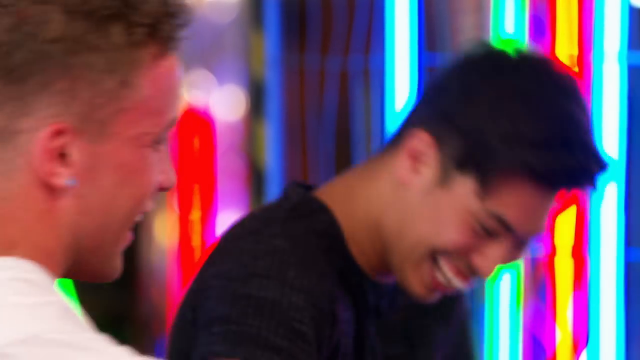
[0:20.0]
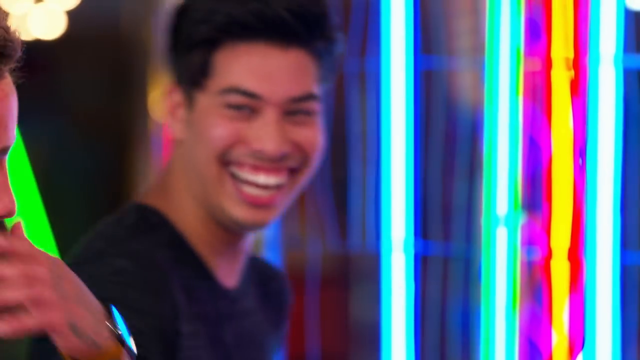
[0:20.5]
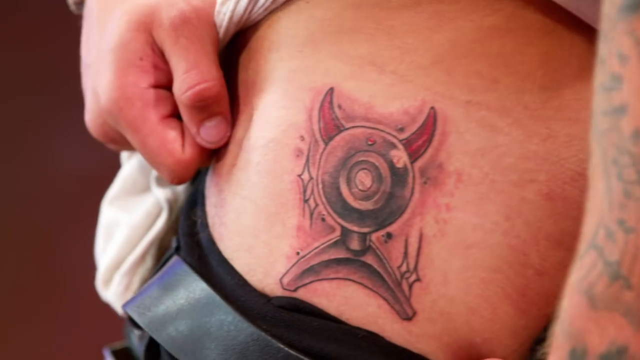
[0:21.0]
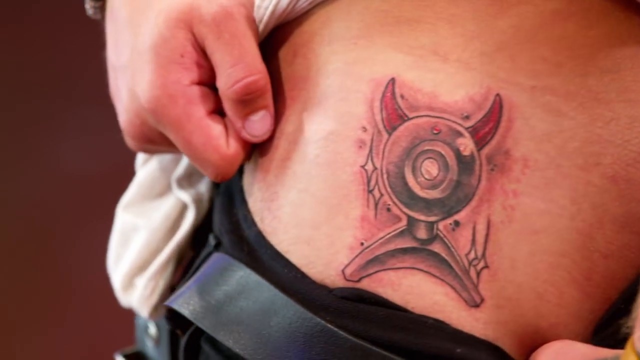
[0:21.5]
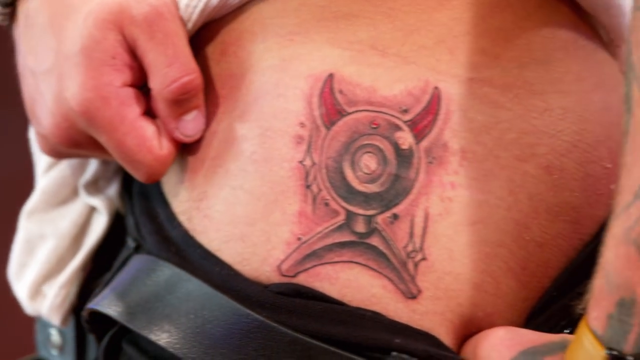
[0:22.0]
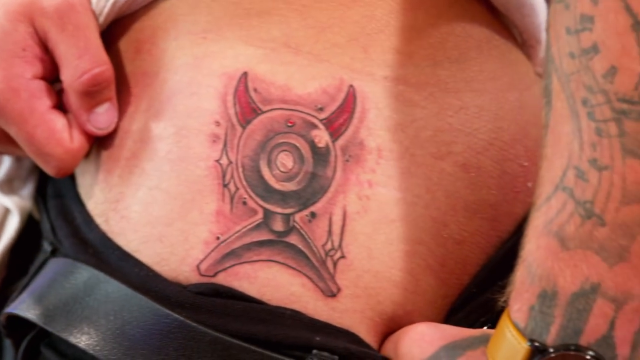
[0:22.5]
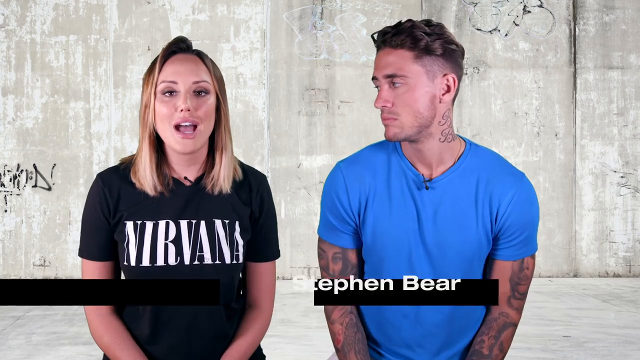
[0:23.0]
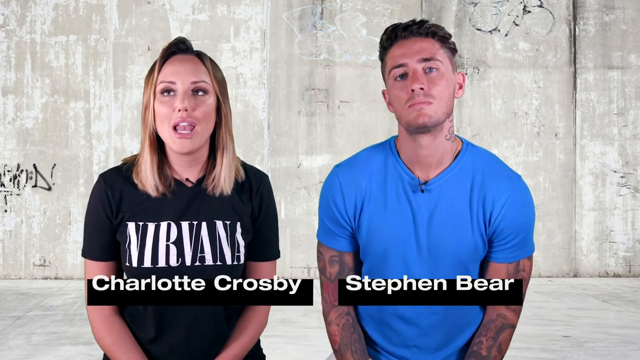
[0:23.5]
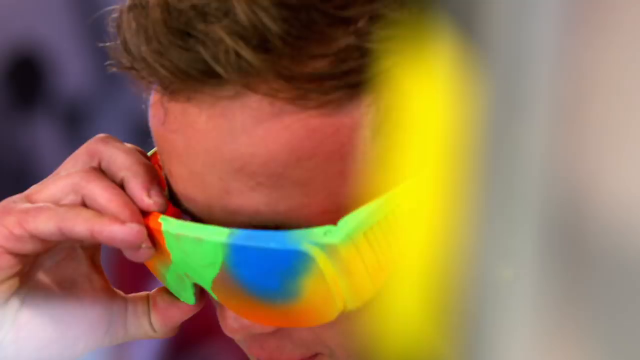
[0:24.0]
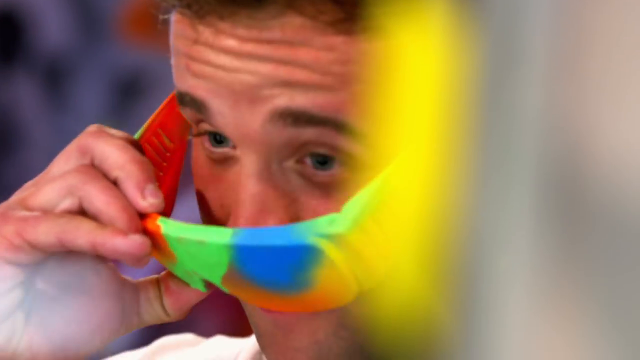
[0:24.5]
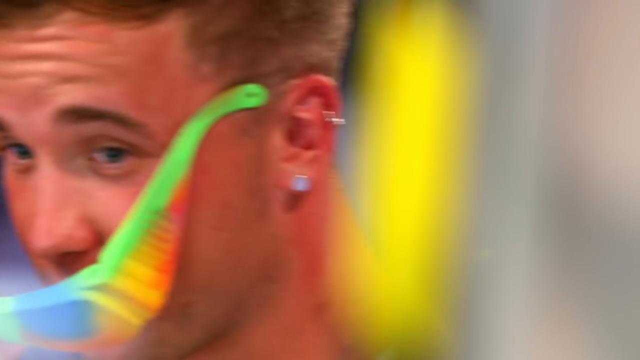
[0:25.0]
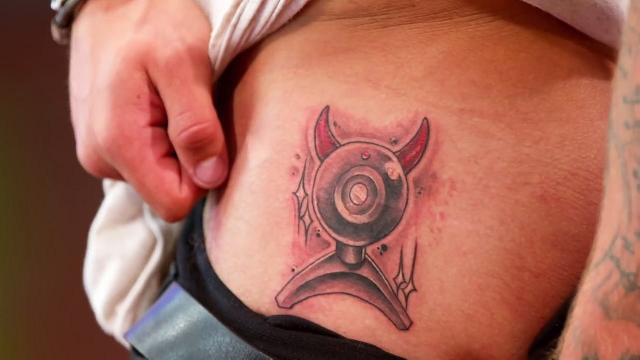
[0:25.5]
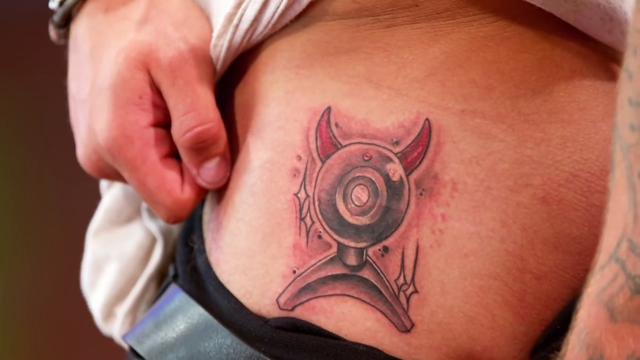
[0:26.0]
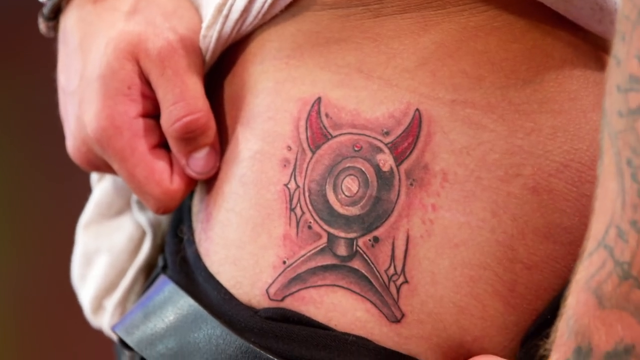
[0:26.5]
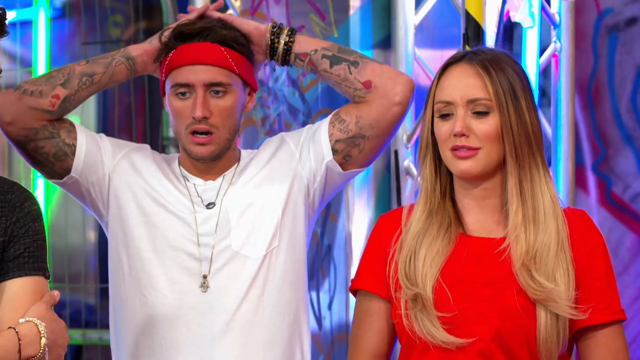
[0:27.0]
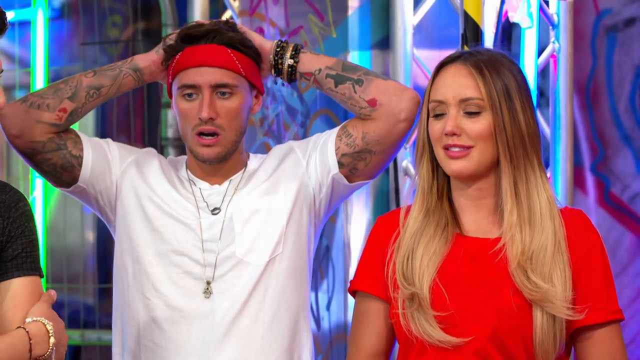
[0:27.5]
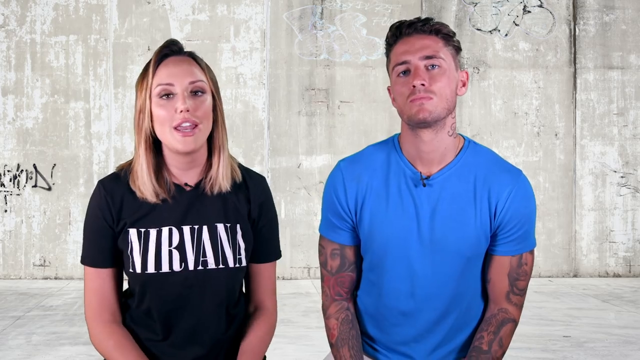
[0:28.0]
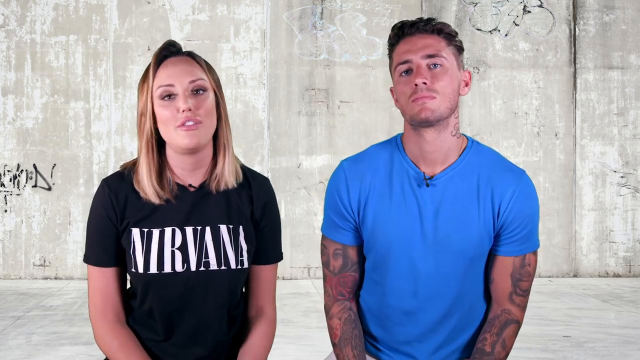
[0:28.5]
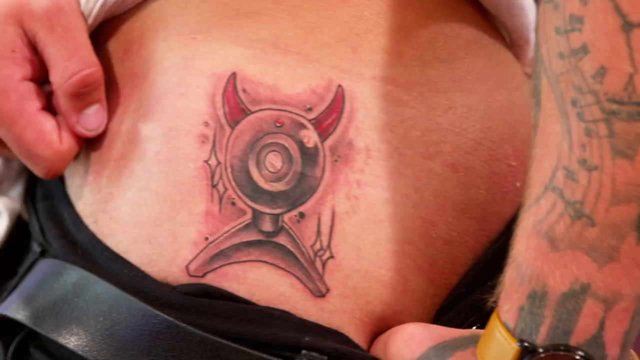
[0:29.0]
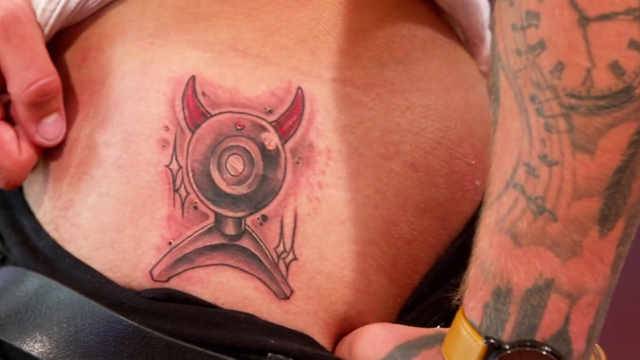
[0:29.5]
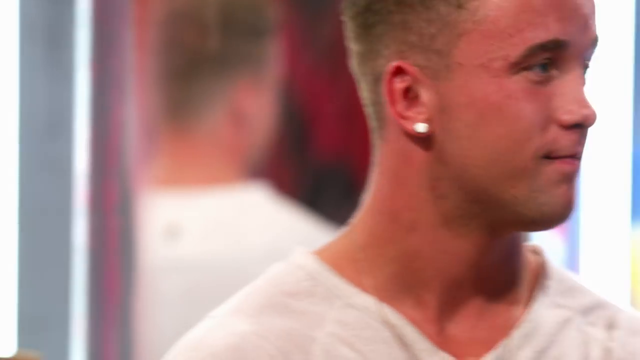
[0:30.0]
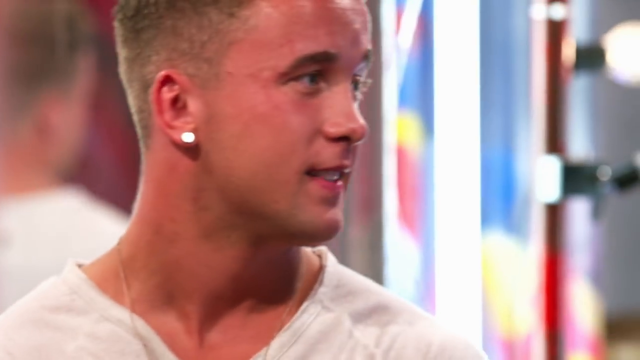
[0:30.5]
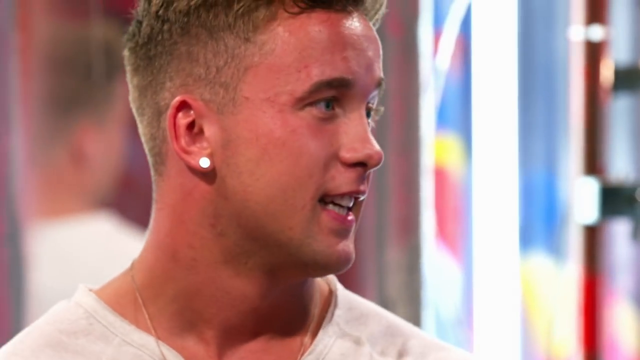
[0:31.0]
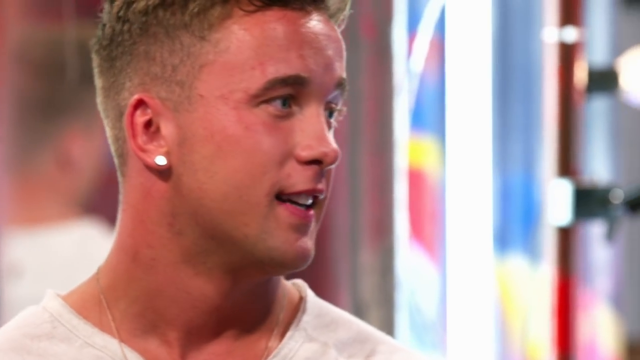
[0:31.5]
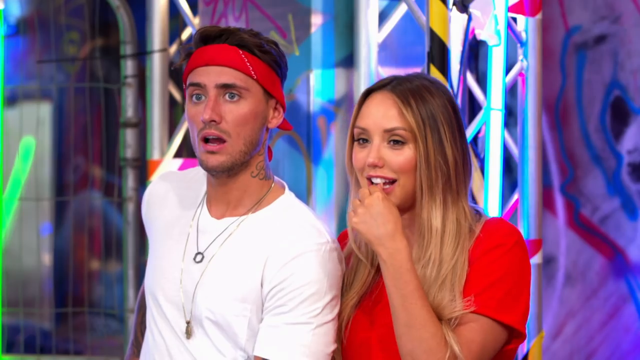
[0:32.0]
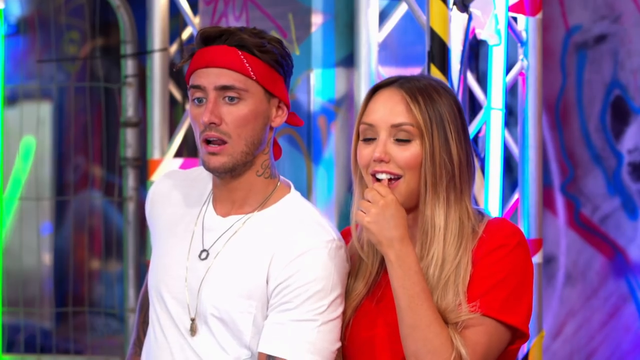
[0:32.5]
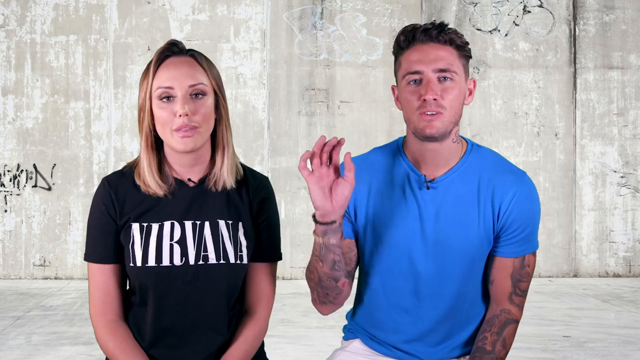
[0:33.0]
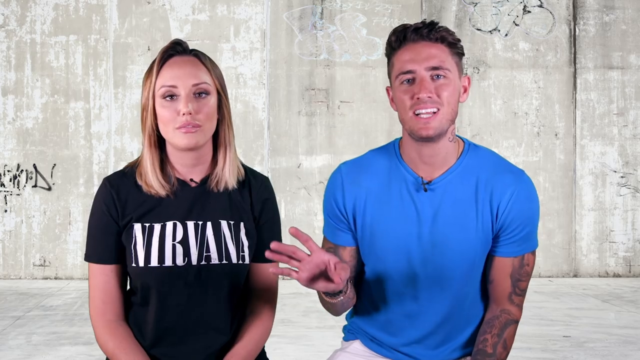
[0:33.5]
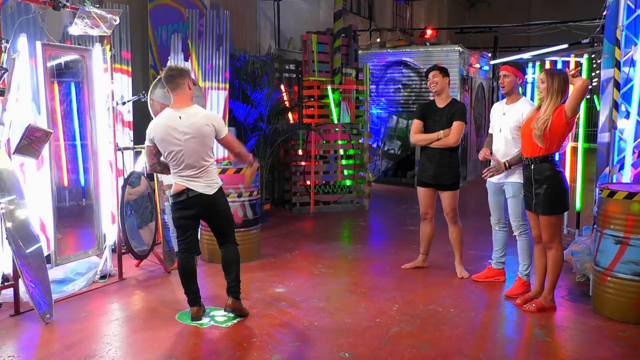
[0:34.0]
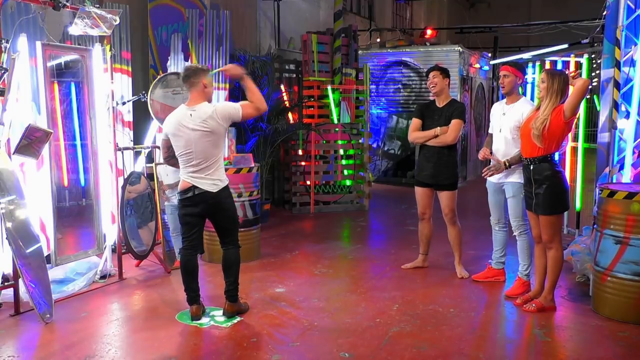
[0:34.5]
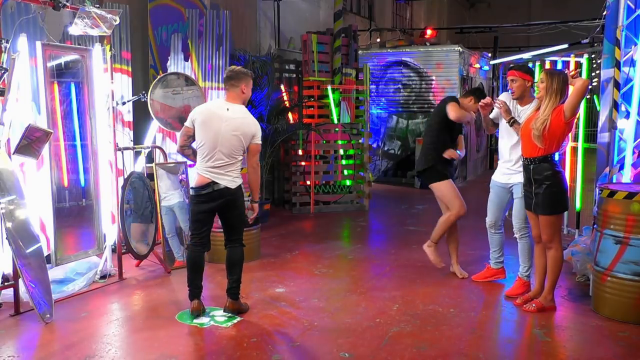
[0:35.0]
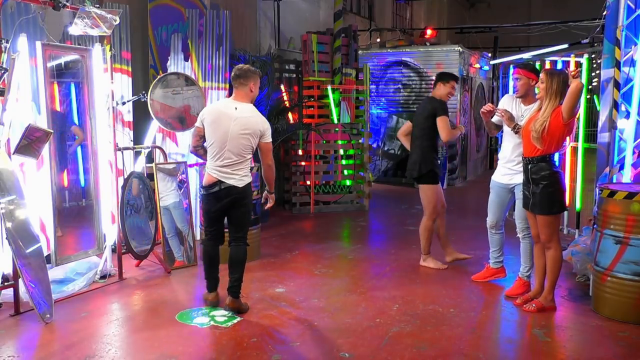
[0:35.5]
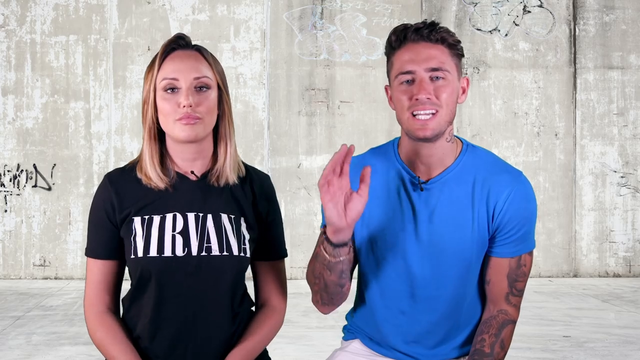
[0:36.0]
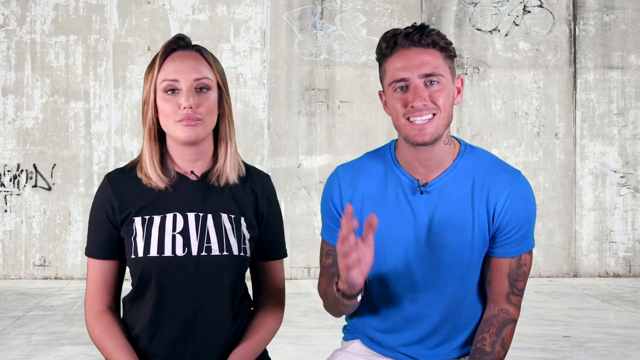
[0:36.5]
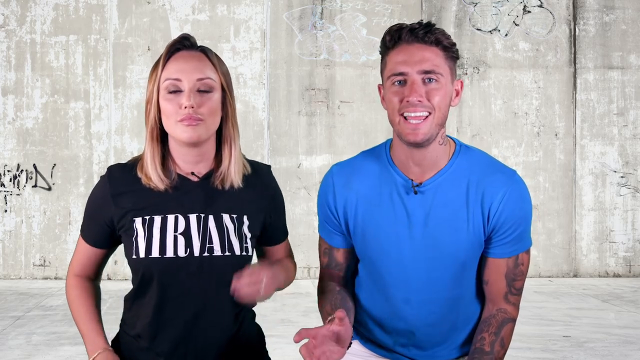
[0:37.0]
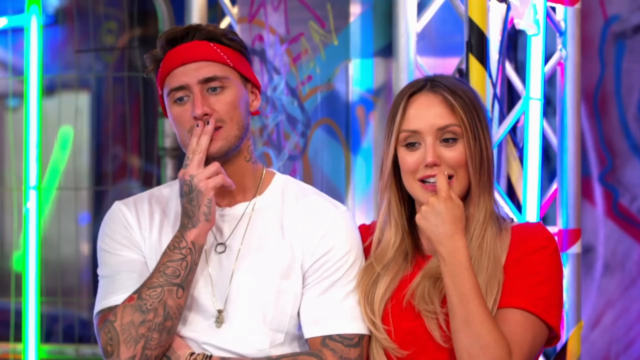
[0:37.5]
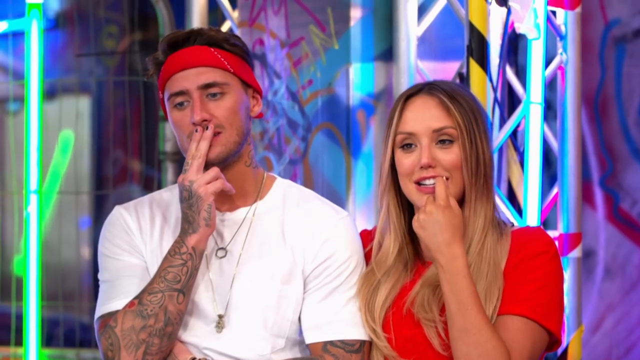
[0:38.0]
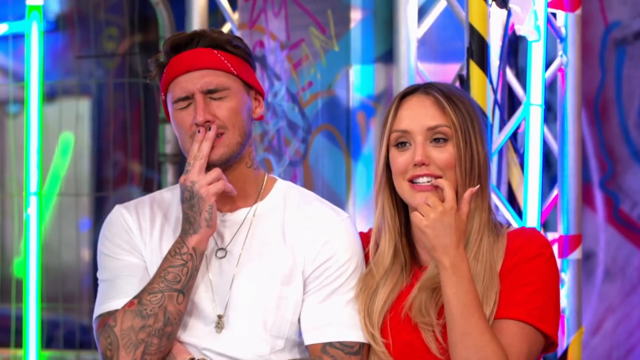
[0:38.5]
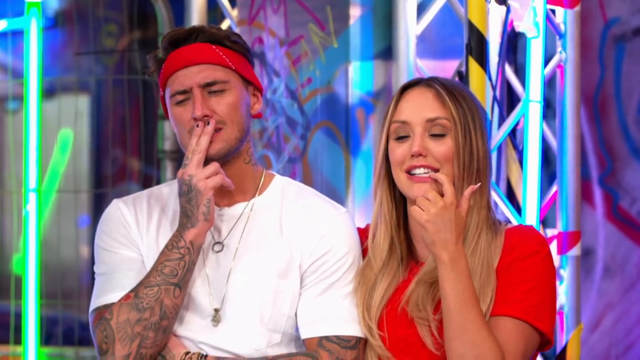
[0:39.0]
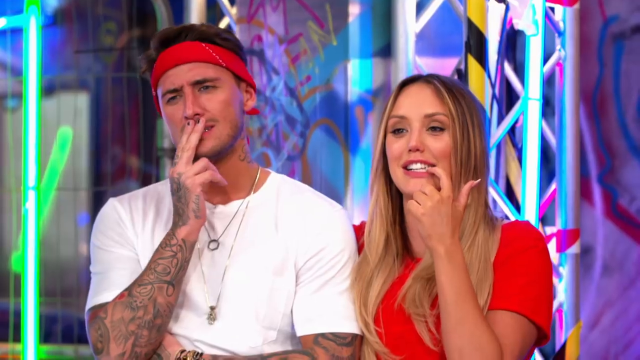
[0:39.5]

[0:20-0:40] Another screen shows a few different people, including a man in a black shirt and another man kind of next to him in a white shirt; one looks kind of Asian or South American and the other Caucasian. Next, someone shows a tattoo on themselves of kind of a webcam with devil horns. The video returns to the man in the blue shirt and the woman in the Nirvana shirt, who has kind of short, dirty blonde hair; the man has tattoo sleeves on his arms and short brown hair. The background behind them looks kind of like a cement or concrete wall. The video switches between a few screens, including the tattoo and a screen of several of the people, one of whom is kind of wearing colorful glasses in neon colors including orange, green, yellow, and blue, before settling on the man and woman again.